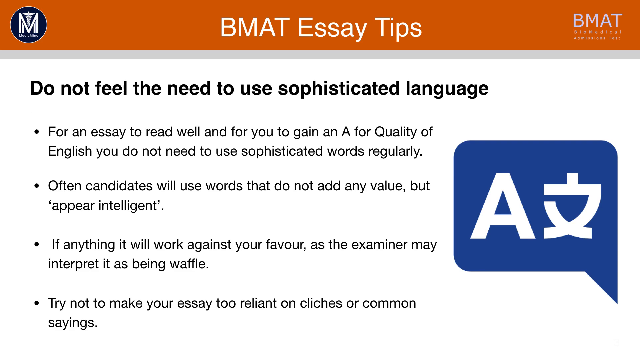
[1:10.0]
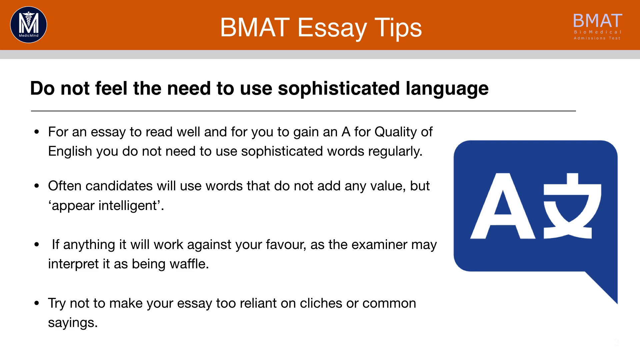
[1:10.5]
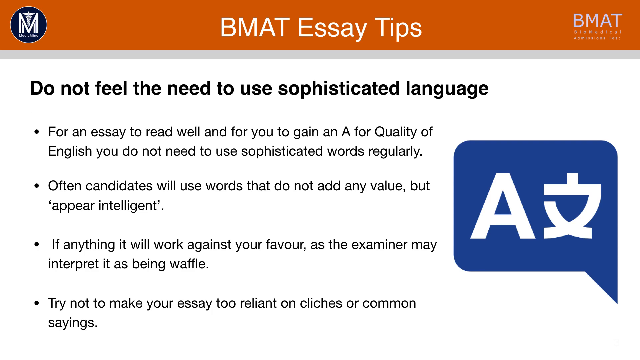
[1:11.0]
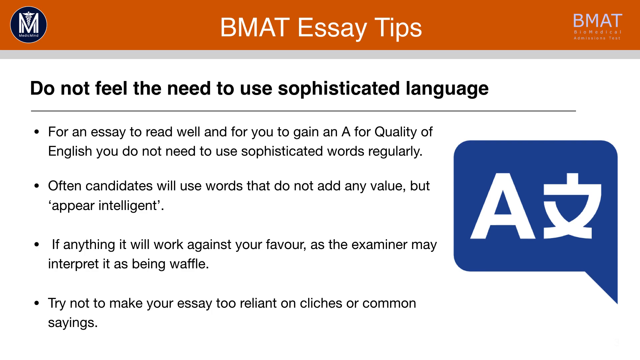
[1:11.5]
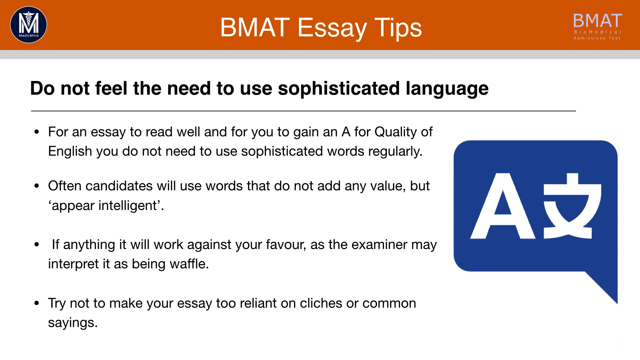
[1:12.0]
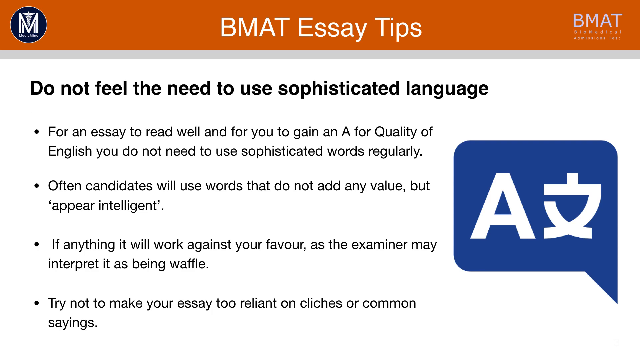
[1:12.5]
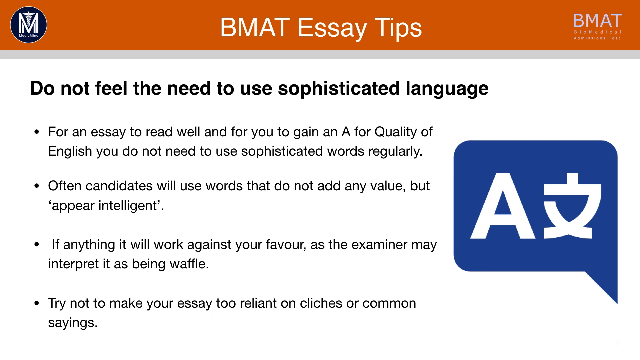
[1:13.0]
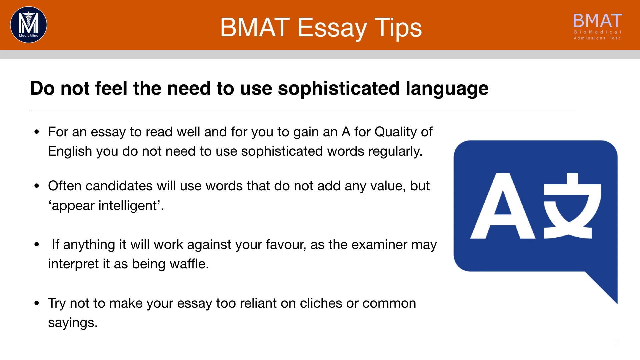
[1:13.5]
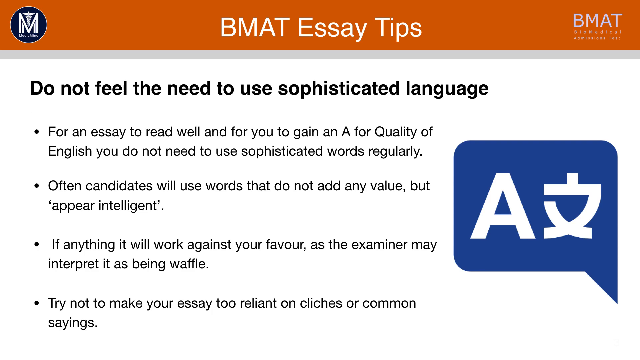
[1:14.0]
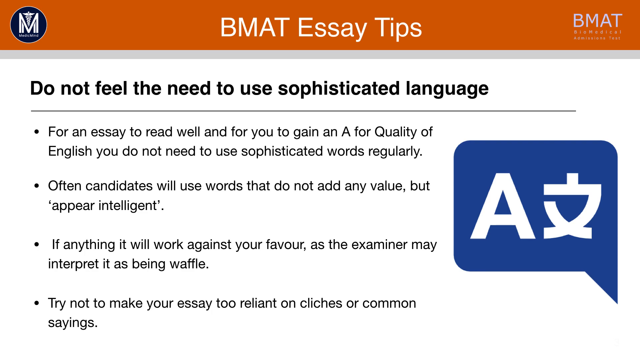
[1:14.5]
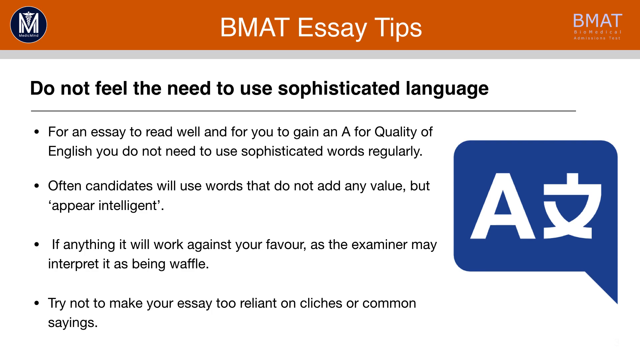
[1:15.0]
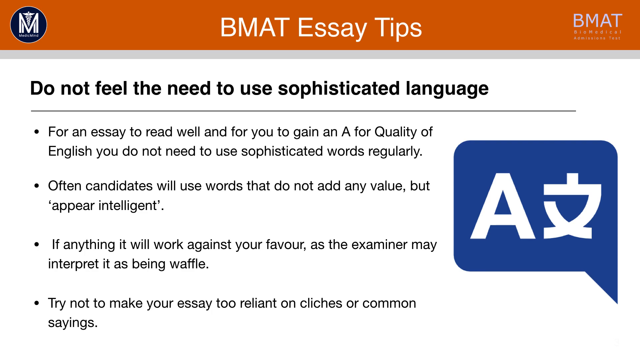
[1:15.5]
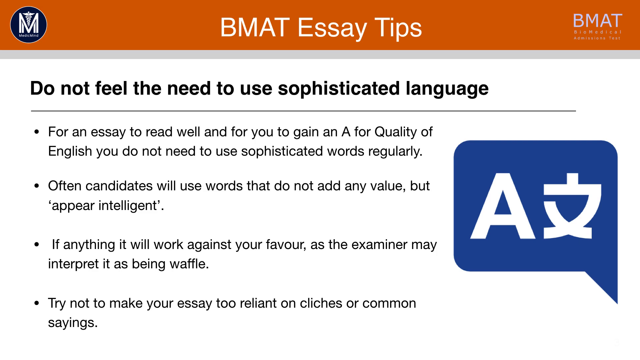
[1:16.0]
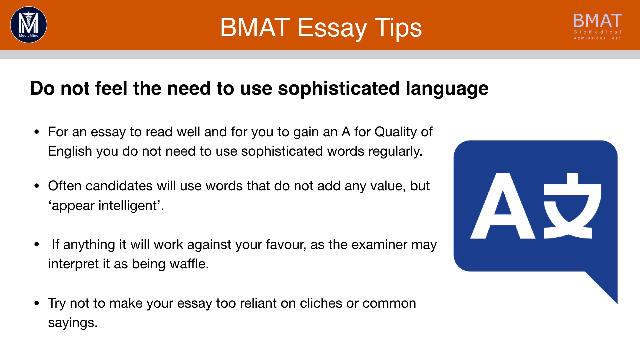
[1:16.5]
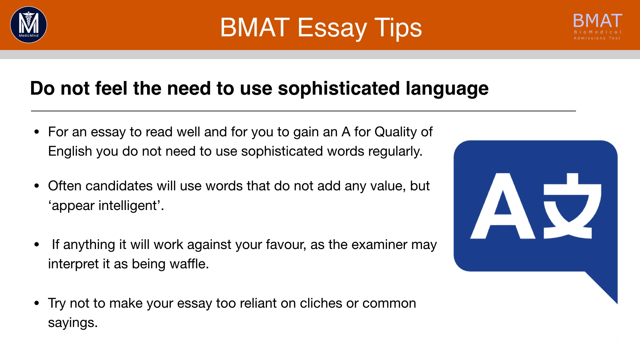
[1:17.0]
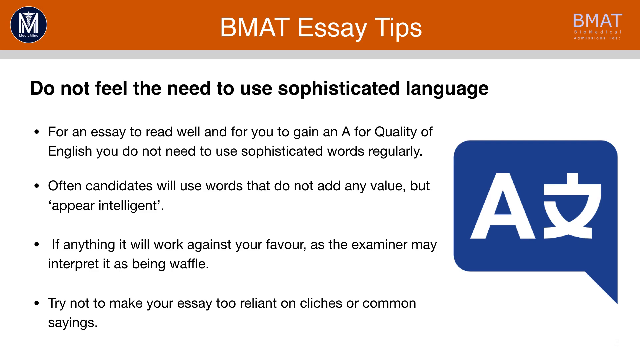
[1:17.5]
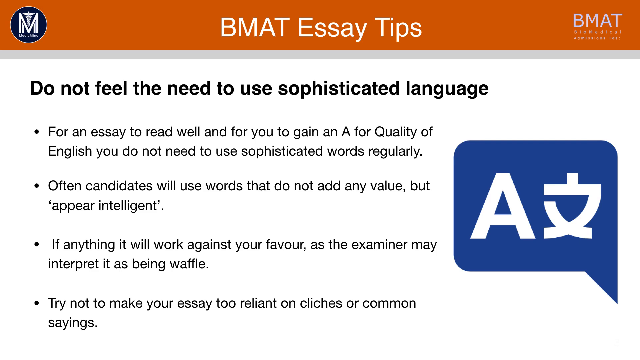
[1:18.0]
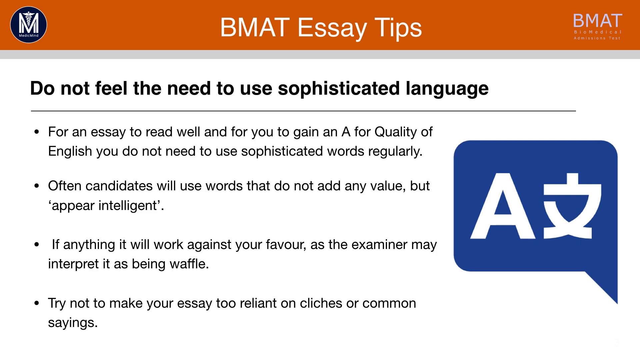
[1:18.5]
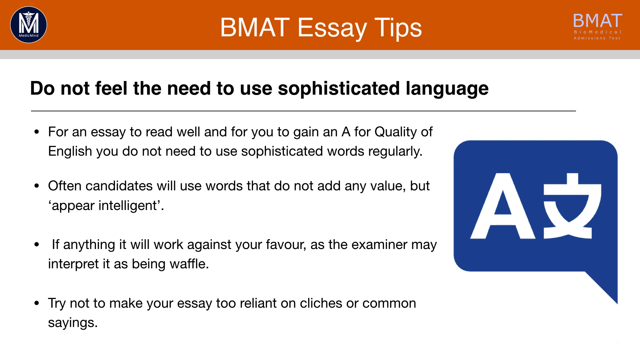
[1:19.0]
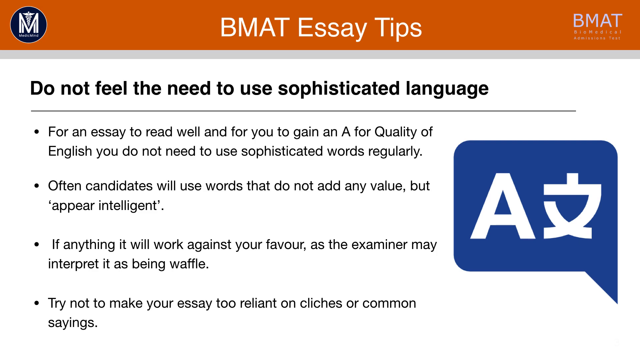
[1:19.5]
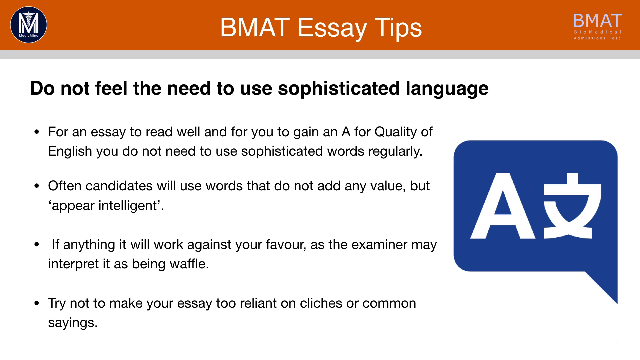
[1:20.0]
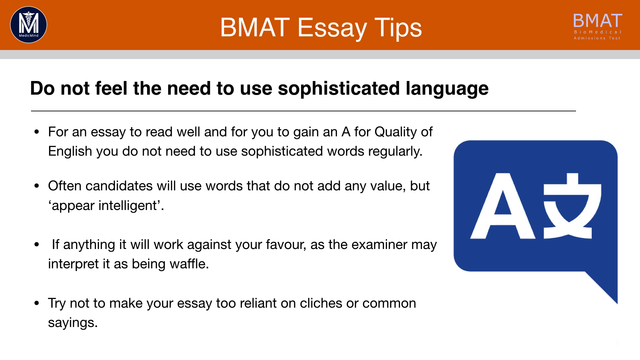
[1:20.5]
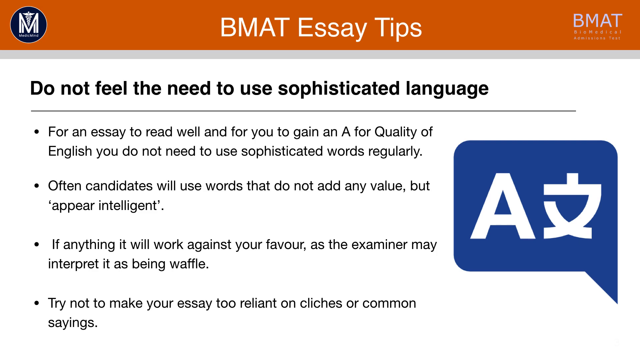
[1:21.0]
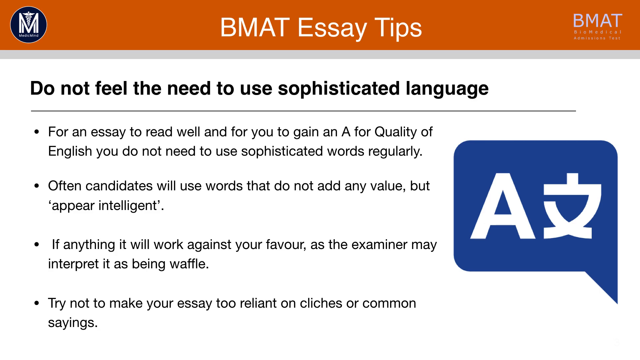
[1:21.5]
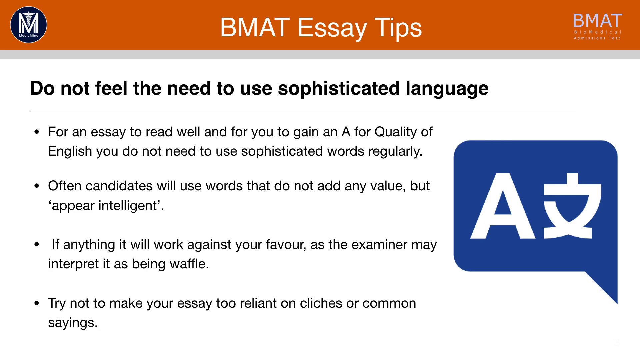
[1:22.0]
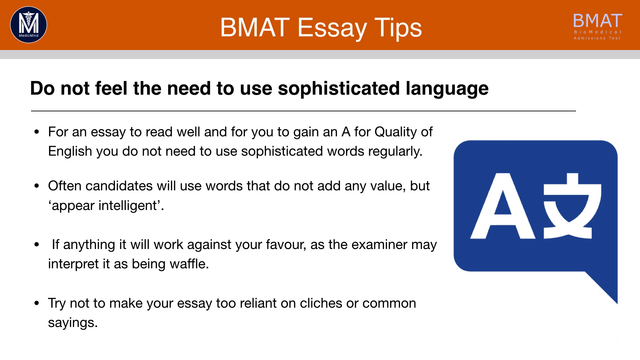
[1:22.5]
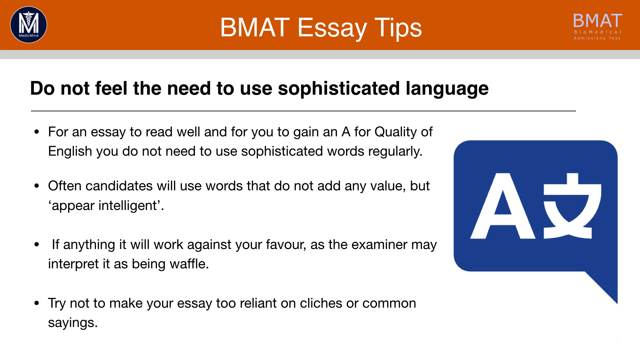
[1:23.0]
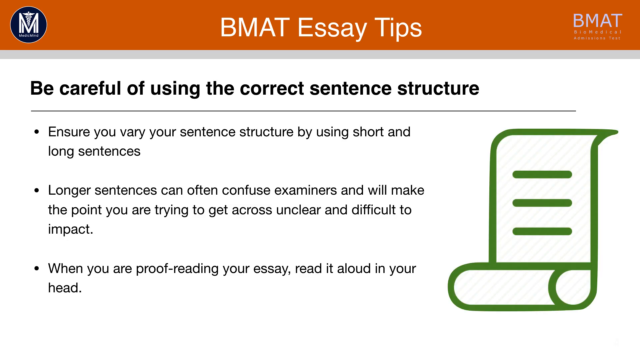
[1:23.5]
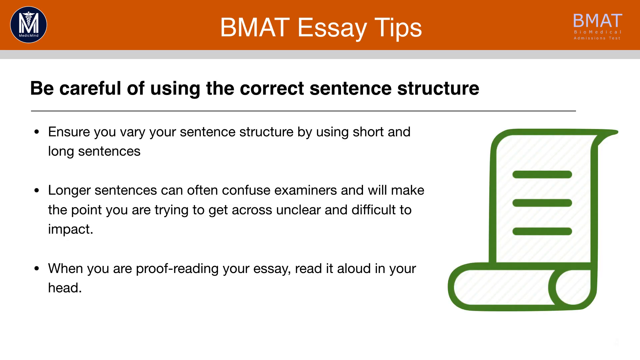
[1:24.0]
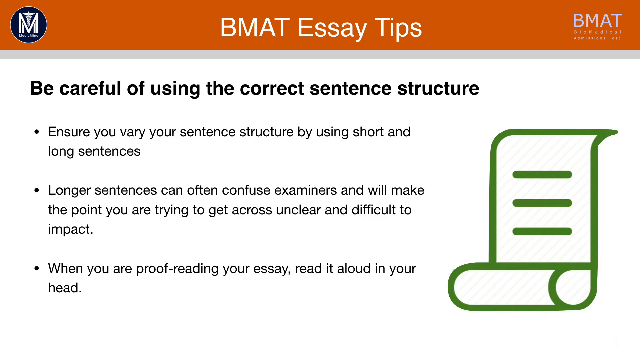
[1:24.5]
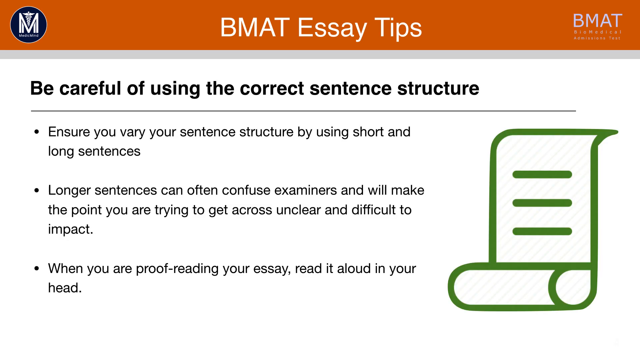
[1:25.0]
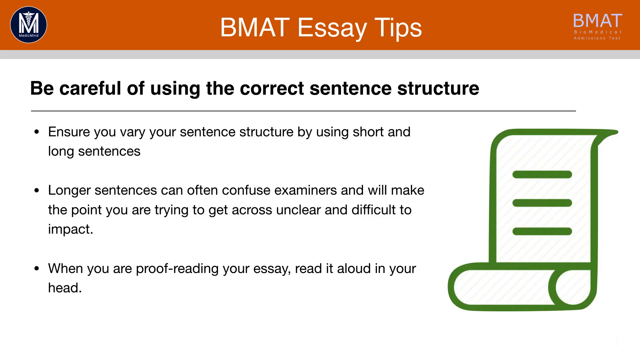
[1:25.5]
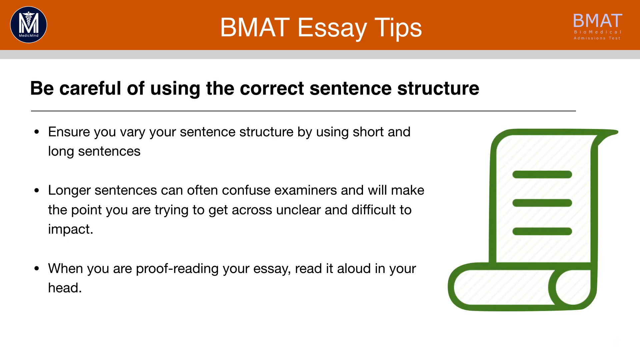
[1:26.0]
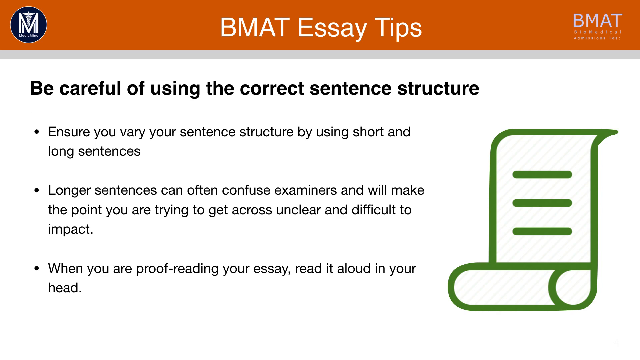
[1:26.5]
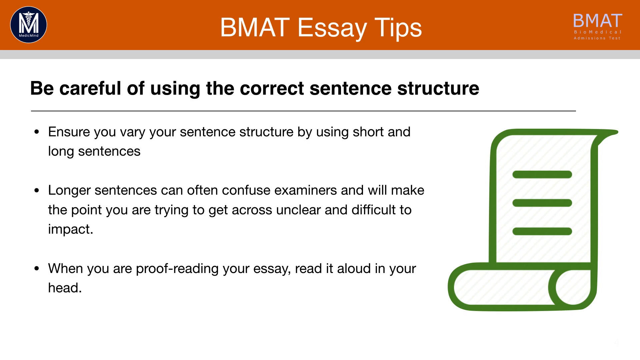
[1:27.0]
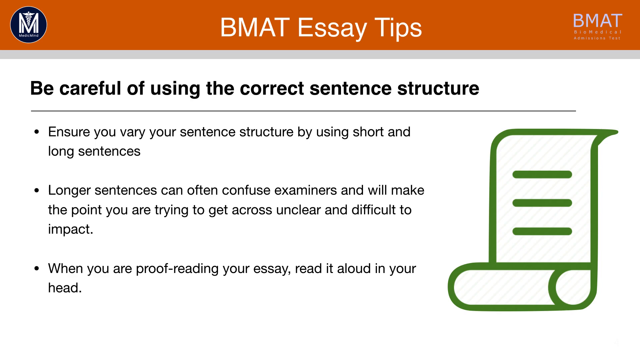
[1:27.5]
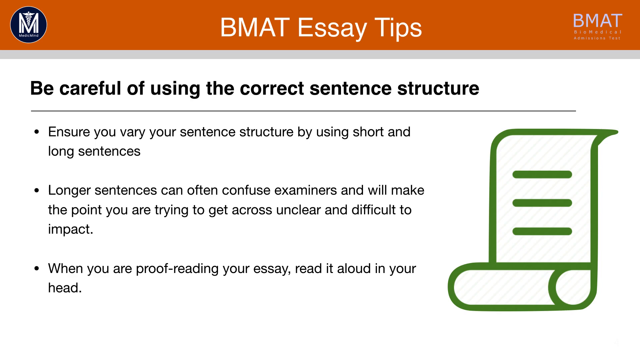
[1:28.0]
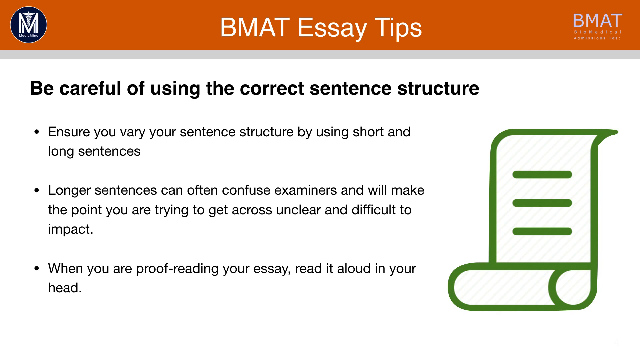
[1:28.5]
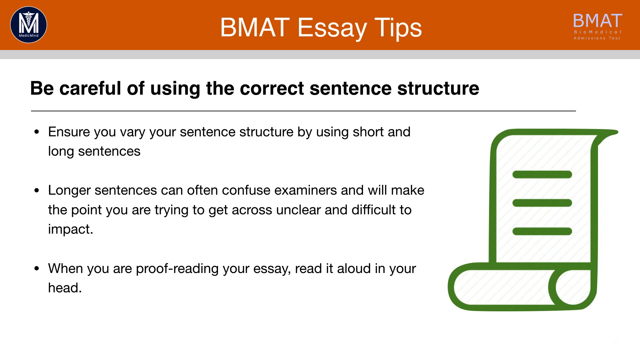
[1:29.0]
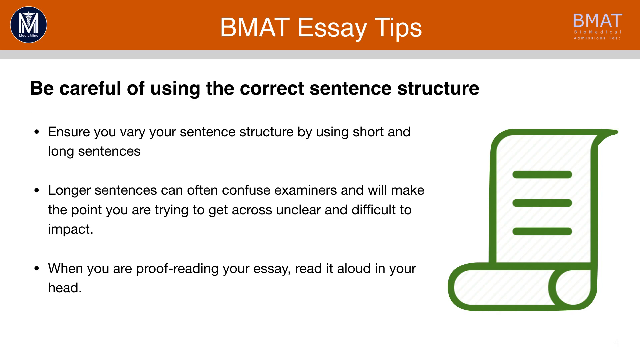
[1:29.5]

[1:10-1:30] The slide continues with the orange overlay at the top, black text reading "do not feel the need to use sophisticated language", four bullet points below it, and the blue logo with white characters on the right side of the screen. After remaining on screen for 14 seconds, it transitions to a new slide, also with an orange overlay, the blue logo at the top left and the BMAT logo at the top right. Black text reads "be careful of using the correct sentence structure", followed by three bullet points about sentence structure. To the right of the bullet points is a logo of a green folded-up document with three lines of text on it. The green document logo takes up 25% of the screen, and the rest remains white.